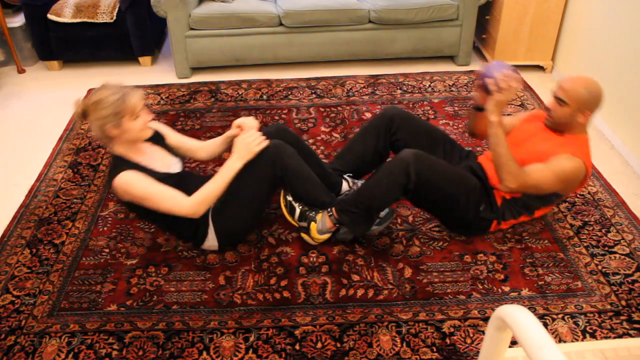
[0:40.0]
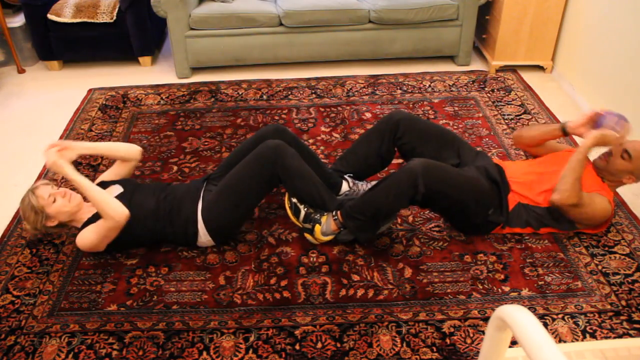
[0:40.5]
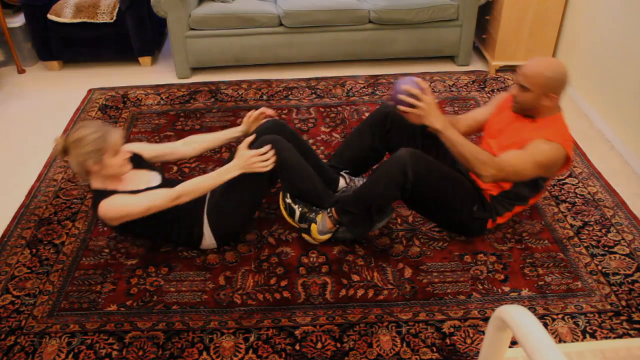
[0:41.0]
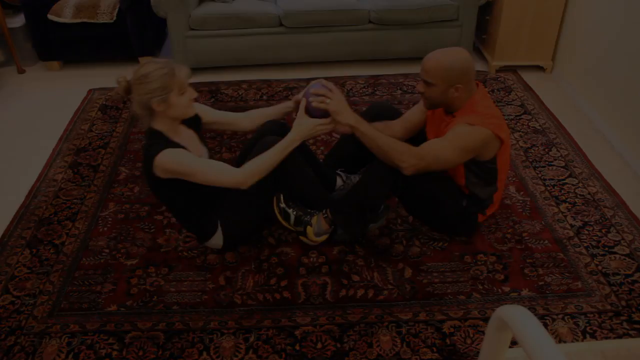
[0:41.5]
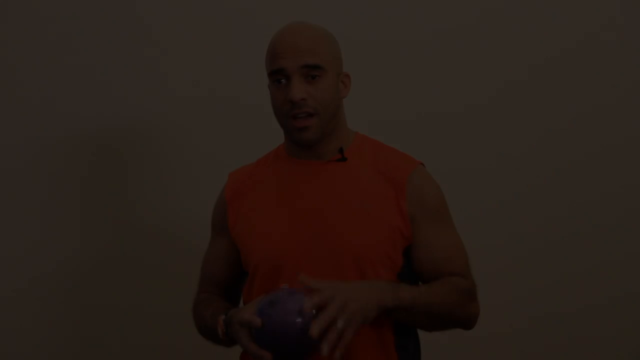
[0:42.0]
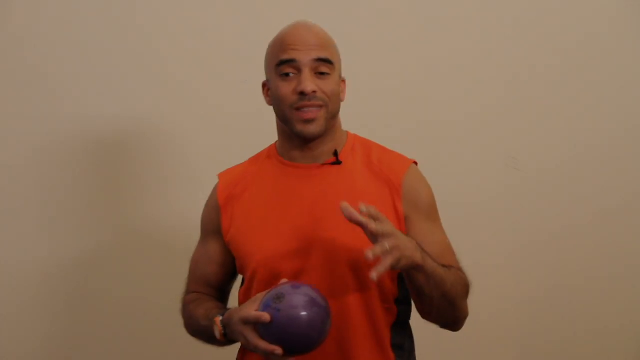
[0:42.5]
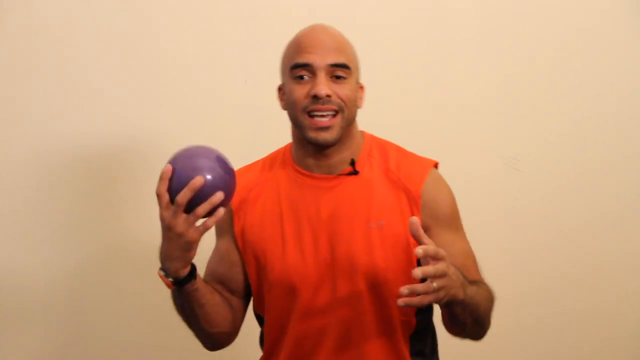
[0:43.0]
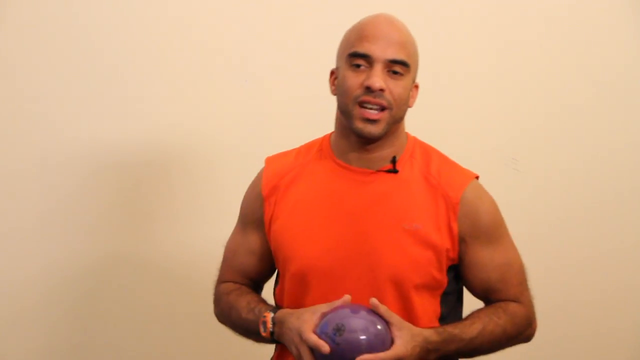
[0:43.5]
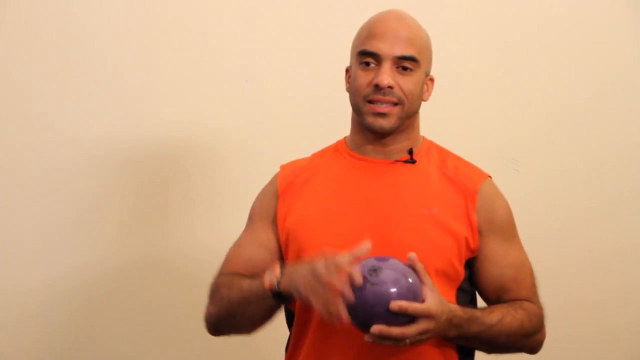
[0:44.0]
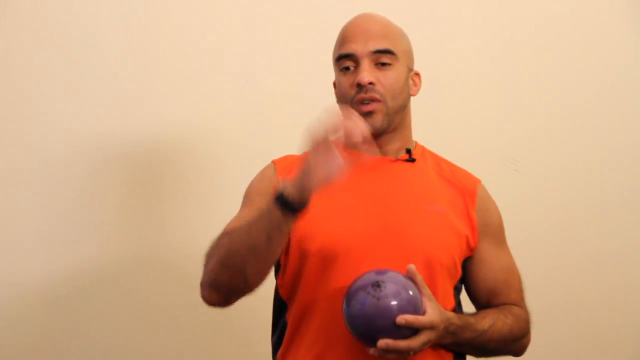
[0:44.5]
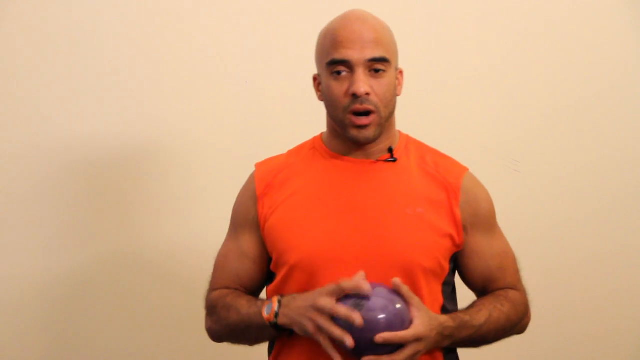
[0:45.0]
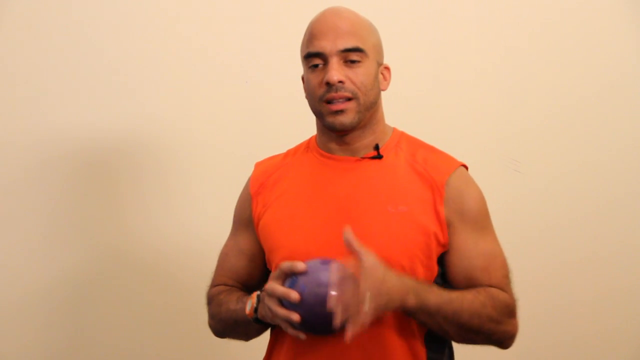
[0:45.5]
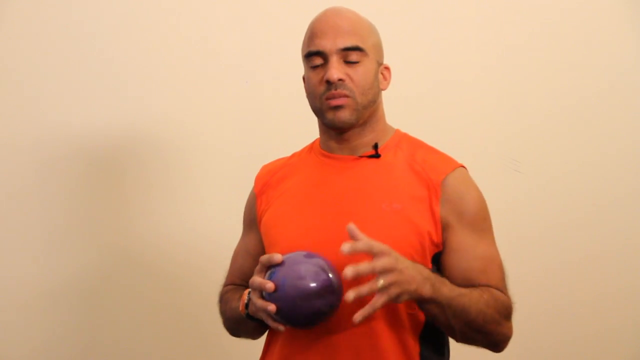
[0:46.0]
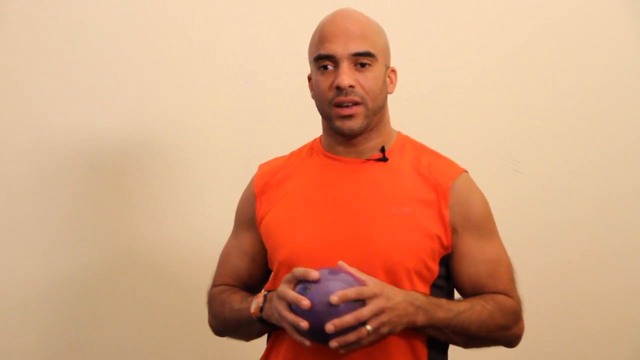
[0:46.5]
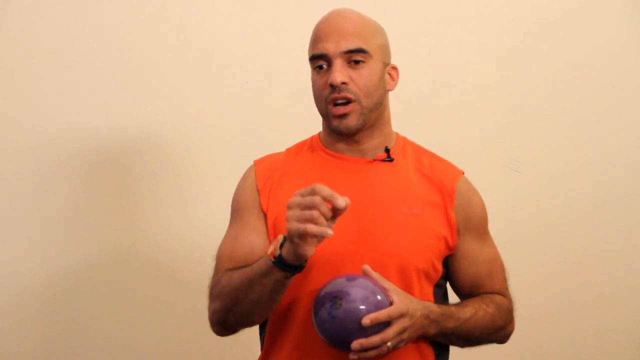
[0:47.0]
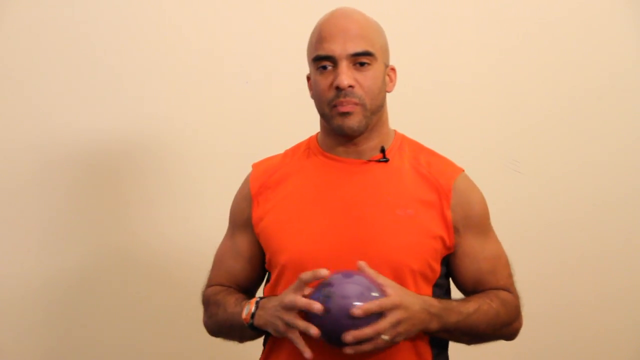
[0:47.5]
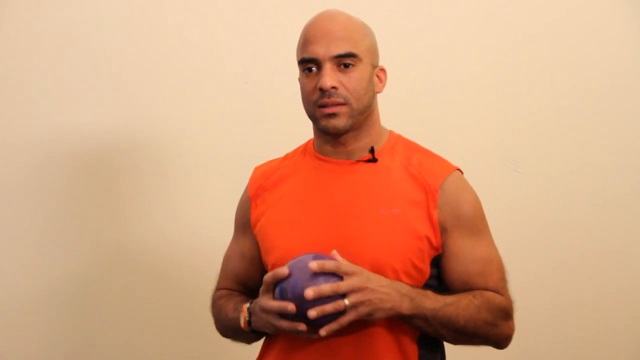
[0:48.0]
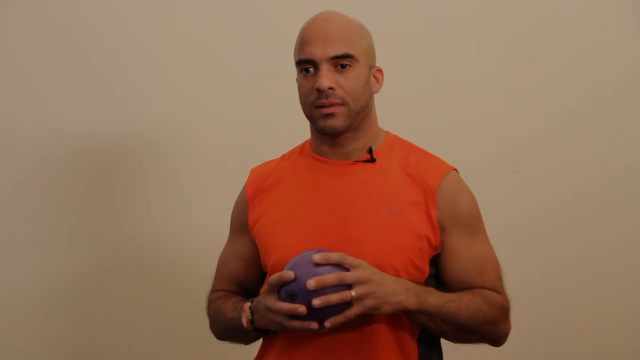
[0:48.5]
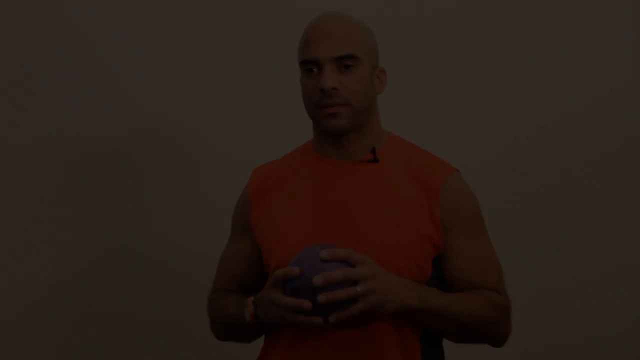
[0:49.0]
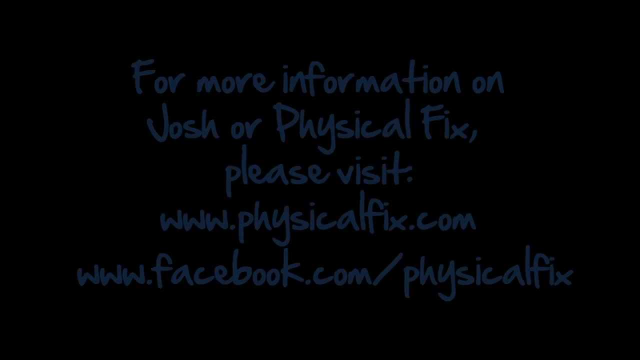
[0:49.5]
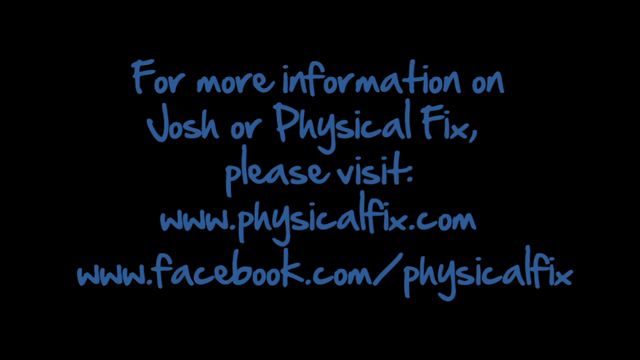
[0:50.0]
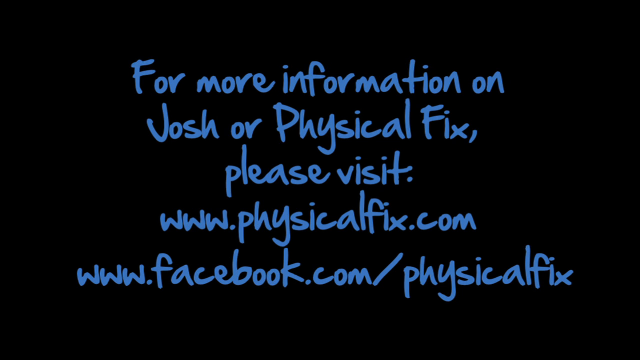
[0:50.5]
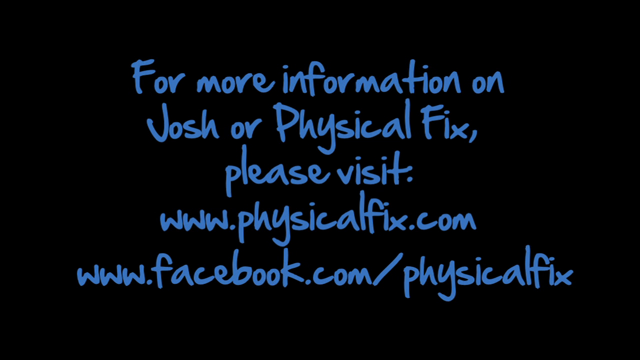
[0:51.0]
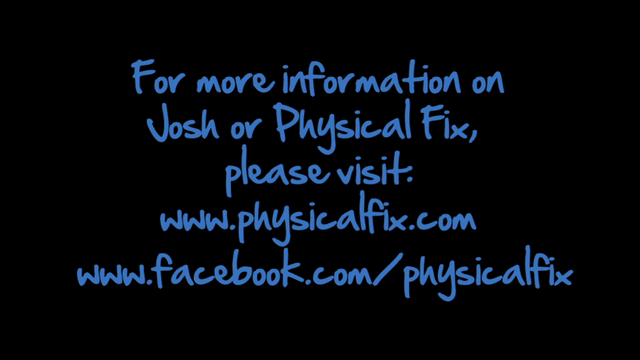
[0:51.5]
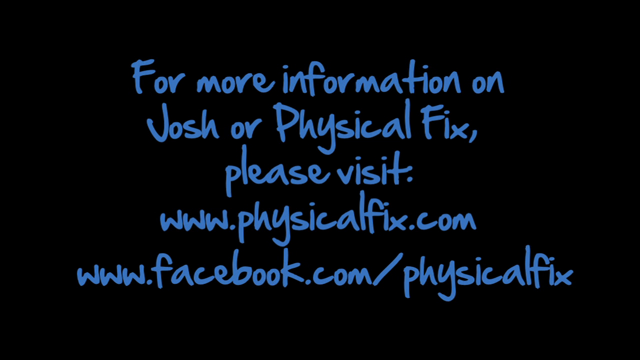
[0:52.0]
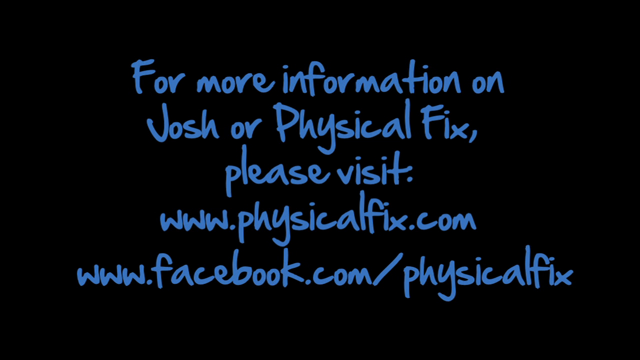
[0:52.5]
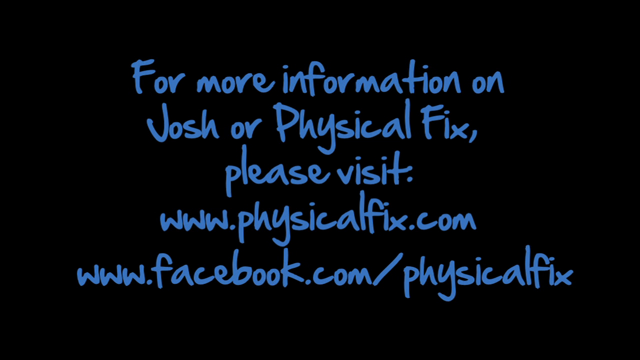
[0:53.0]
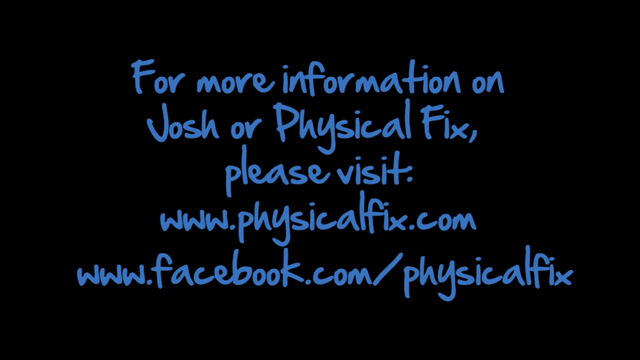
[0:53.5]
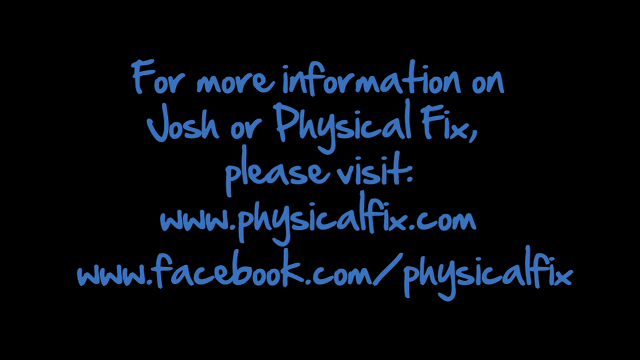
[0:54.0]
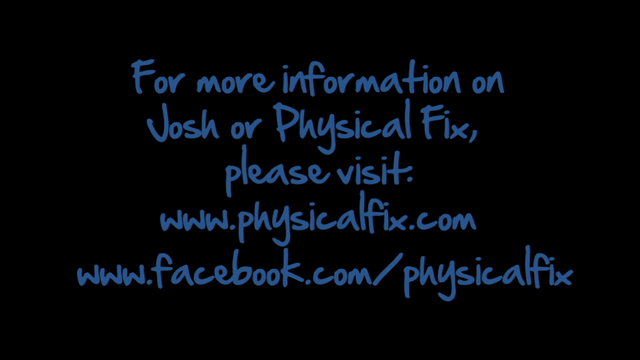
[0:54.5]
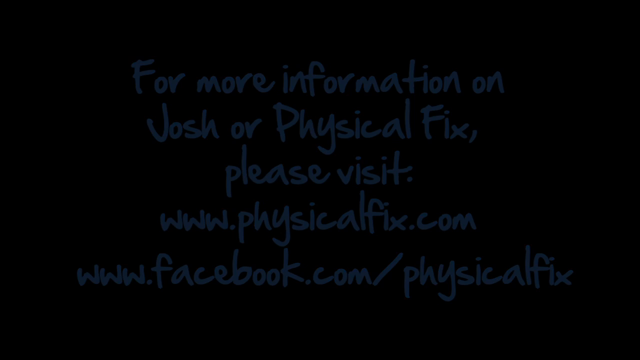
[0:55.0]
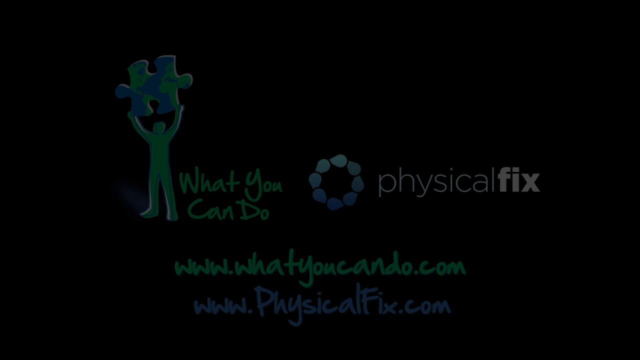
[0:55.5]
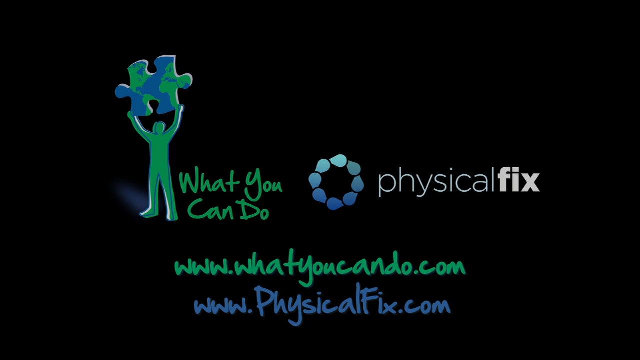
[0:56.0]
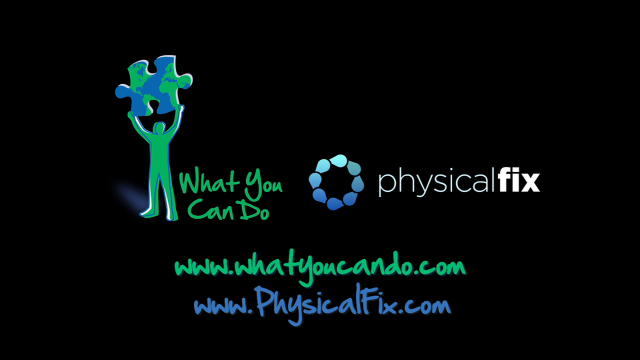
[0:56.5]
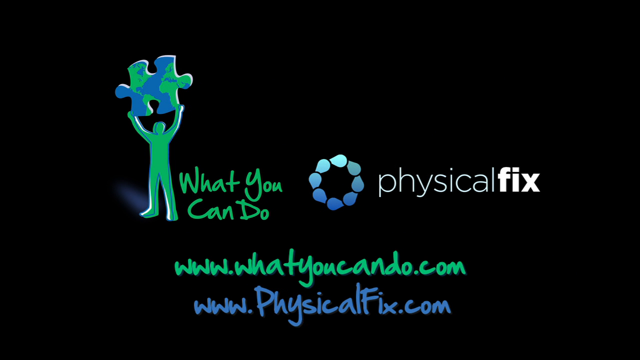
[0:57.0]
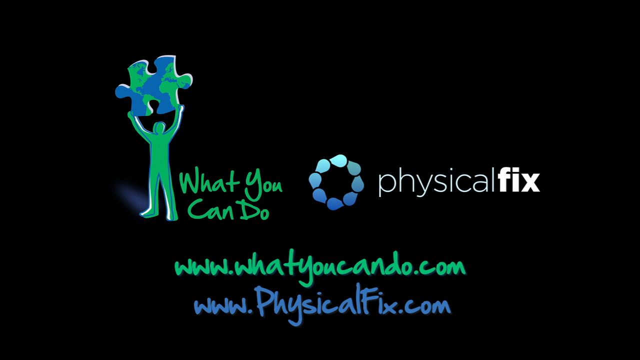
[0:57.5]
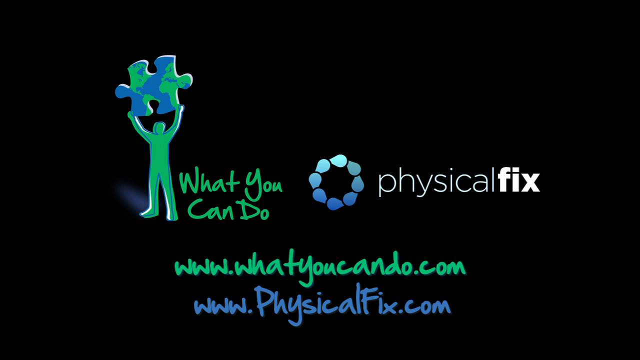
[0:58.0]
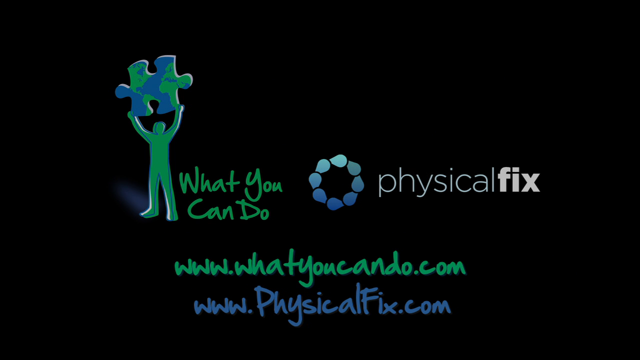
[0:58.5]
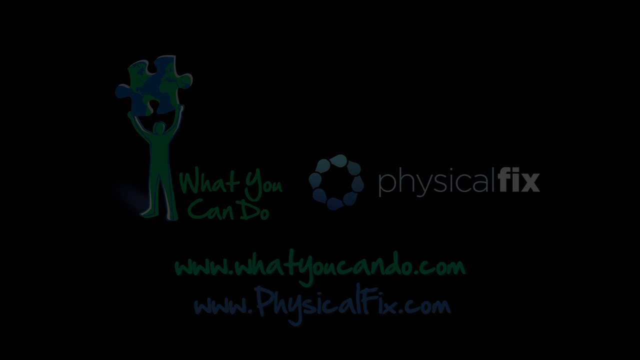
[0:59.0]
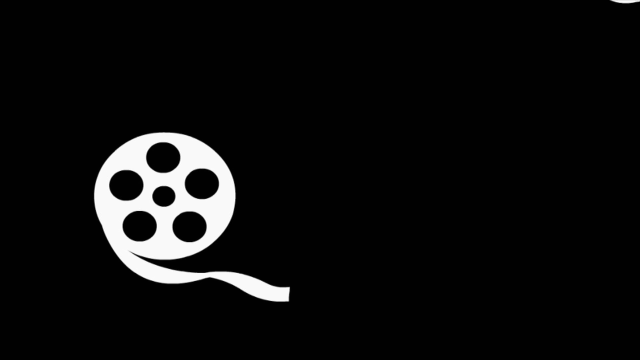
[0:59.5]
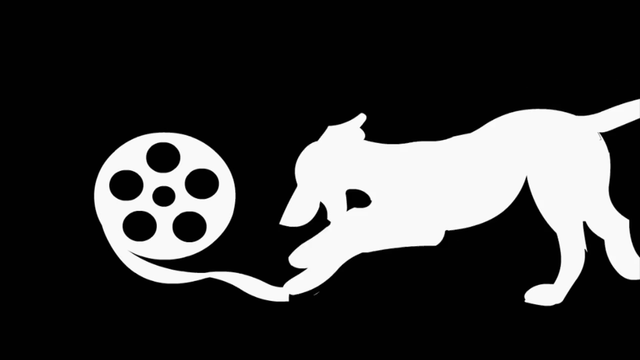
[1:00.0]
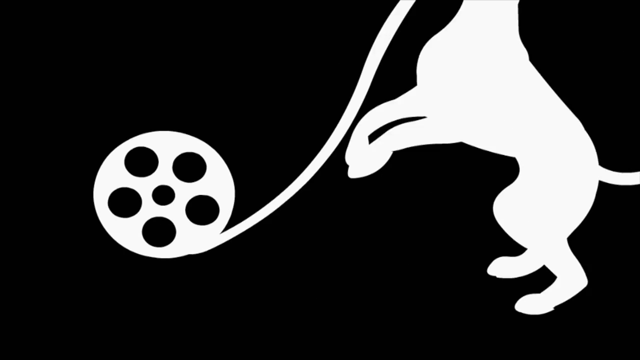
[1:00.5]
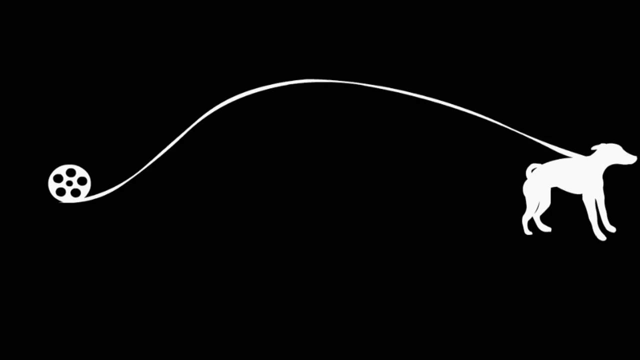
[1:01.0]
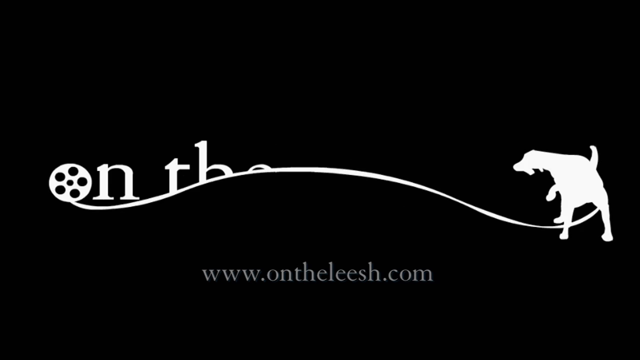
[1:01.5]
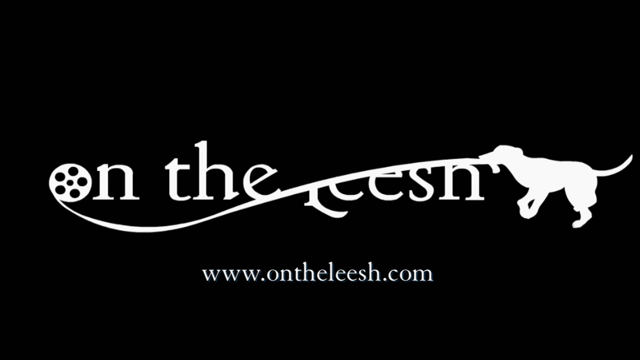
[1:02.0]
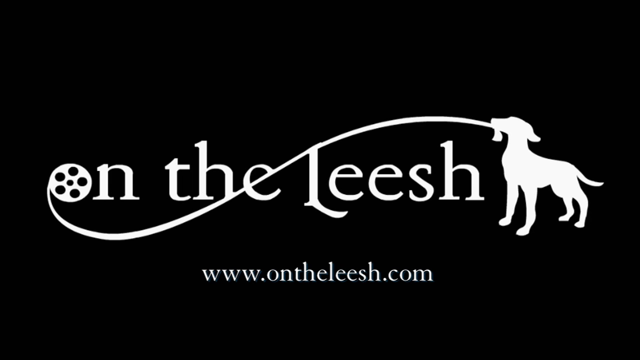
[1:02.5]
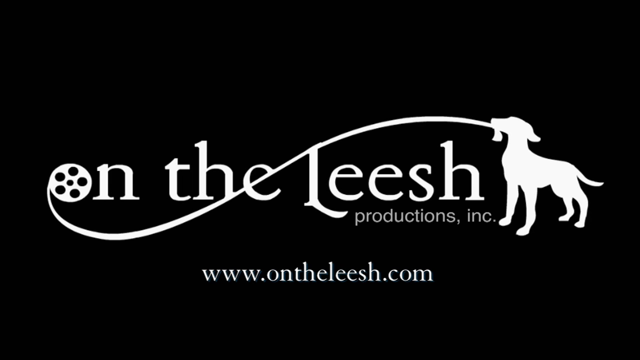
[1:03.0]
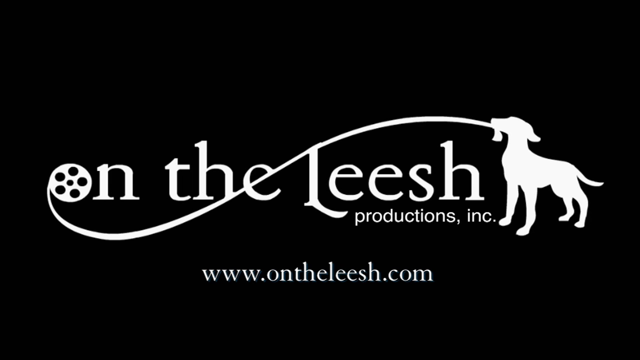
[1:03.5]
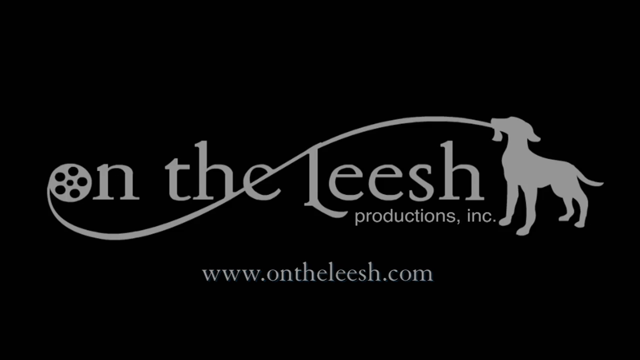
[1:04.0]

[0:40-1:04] The two continue the exercise, passing the ball to each other one by one. Closing text directs viewers to Physical Fix: "please visit www.physicalfix.com and www.facebook.com/physicalfix.com".